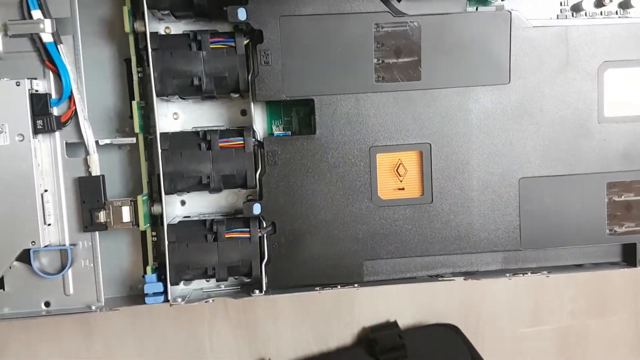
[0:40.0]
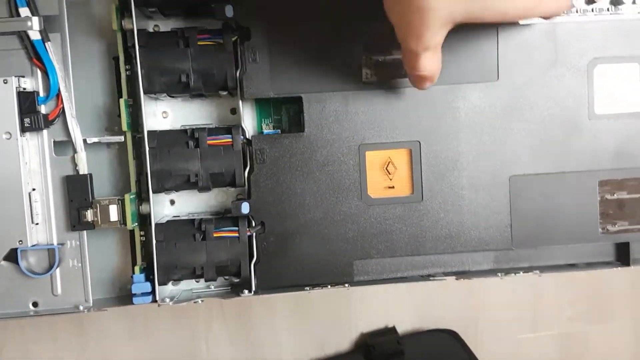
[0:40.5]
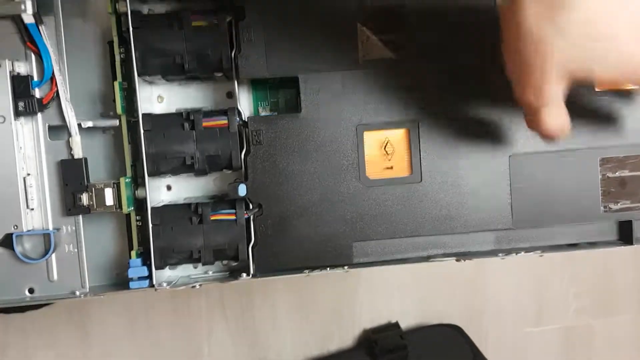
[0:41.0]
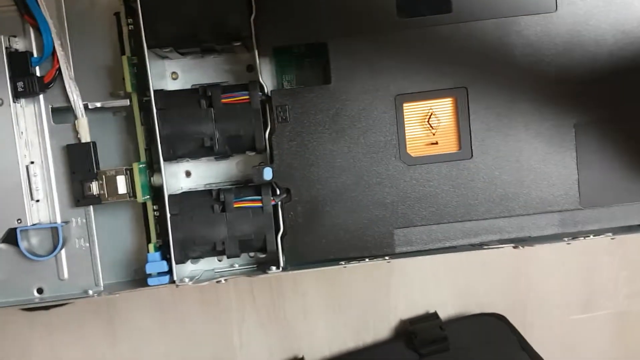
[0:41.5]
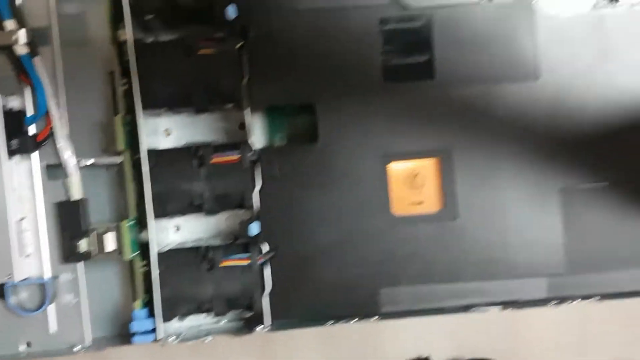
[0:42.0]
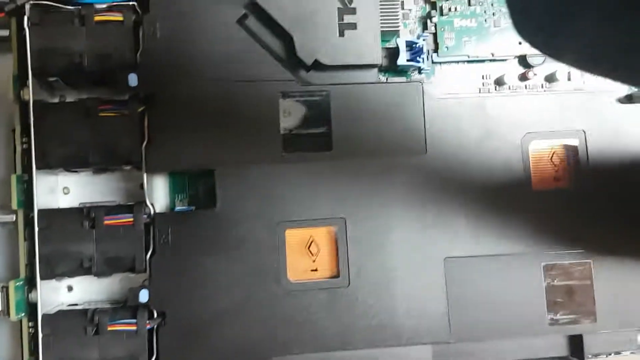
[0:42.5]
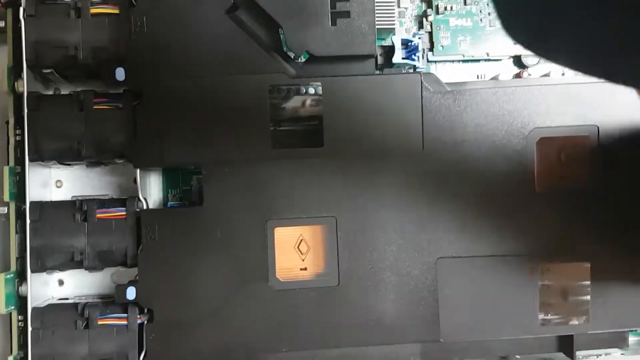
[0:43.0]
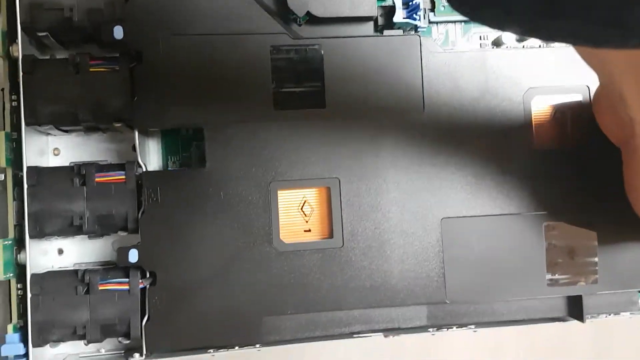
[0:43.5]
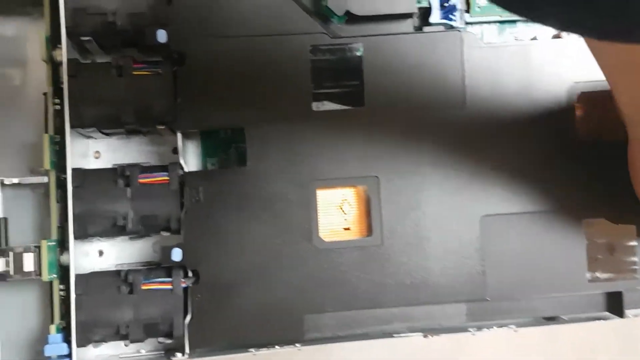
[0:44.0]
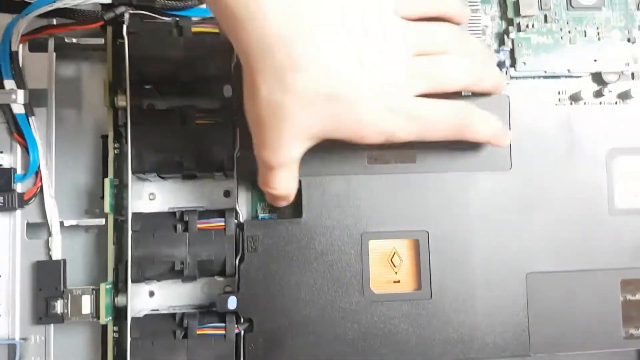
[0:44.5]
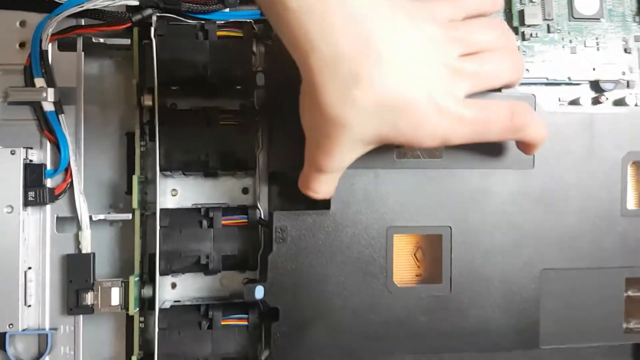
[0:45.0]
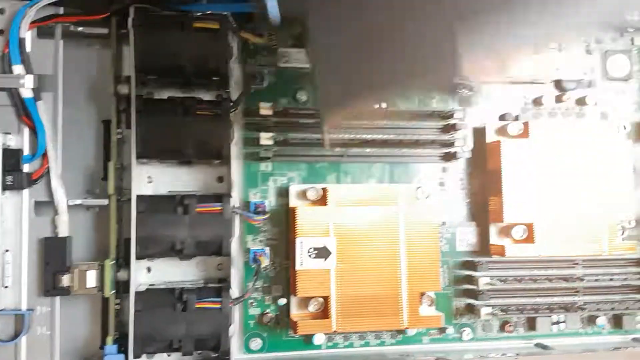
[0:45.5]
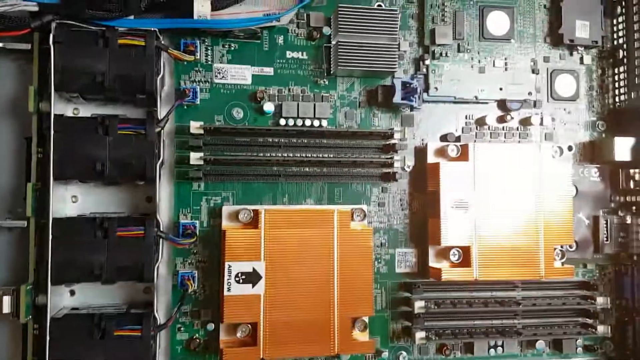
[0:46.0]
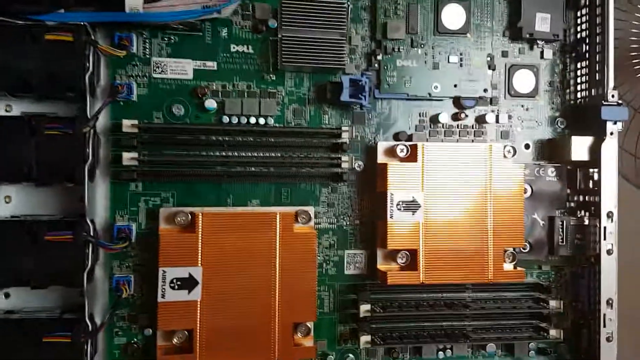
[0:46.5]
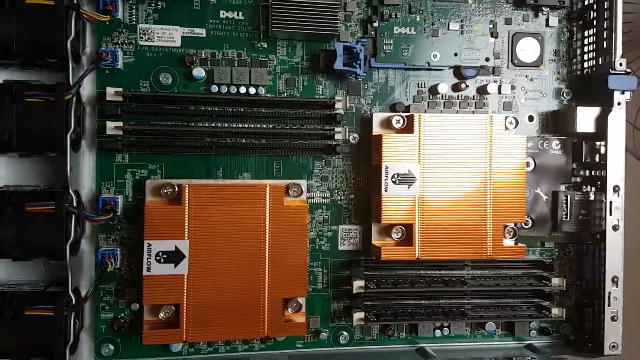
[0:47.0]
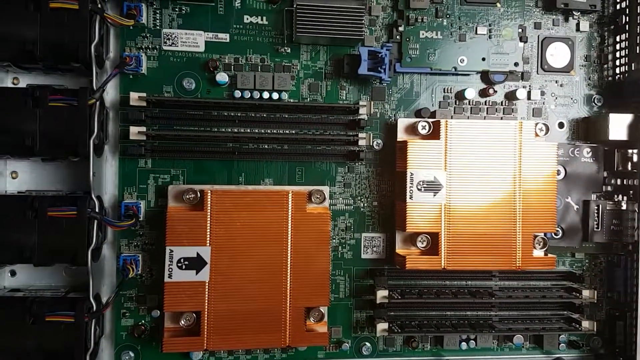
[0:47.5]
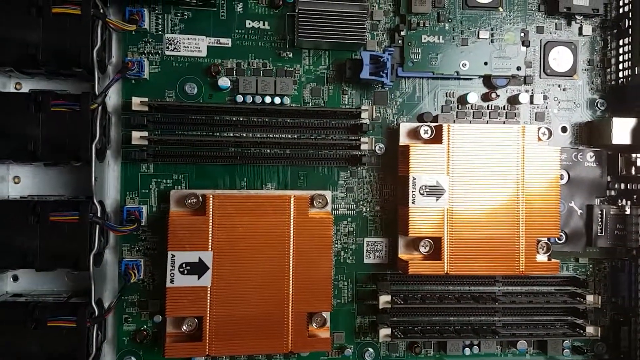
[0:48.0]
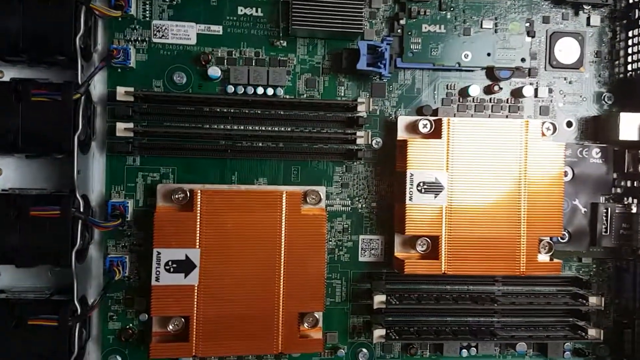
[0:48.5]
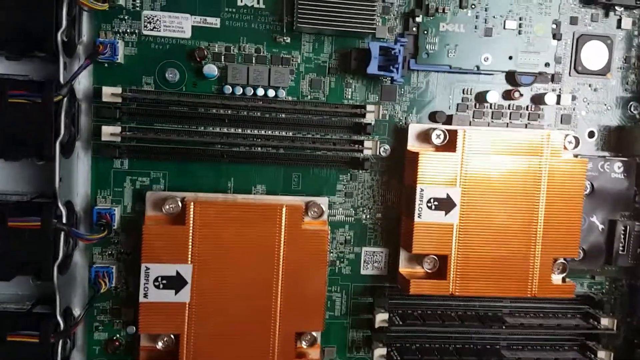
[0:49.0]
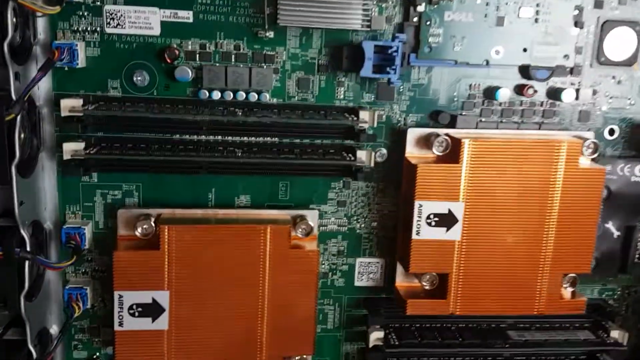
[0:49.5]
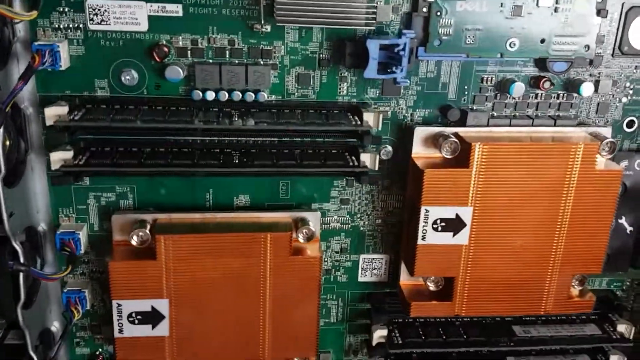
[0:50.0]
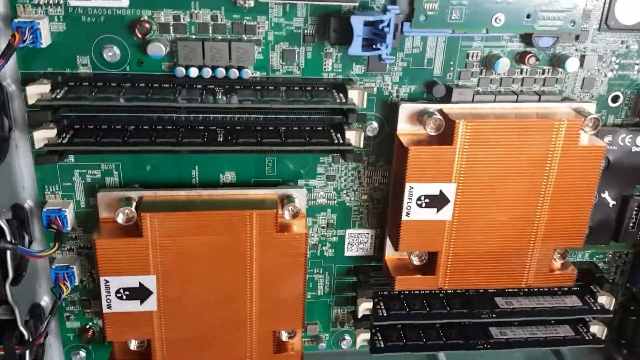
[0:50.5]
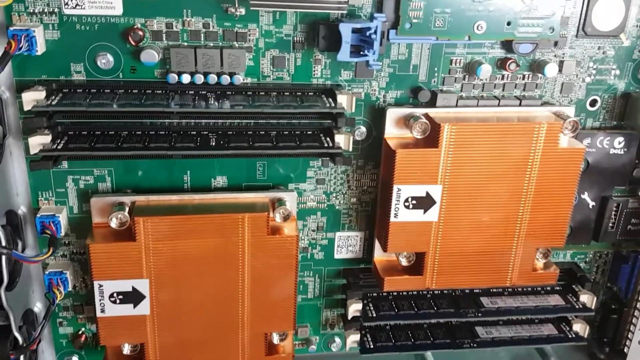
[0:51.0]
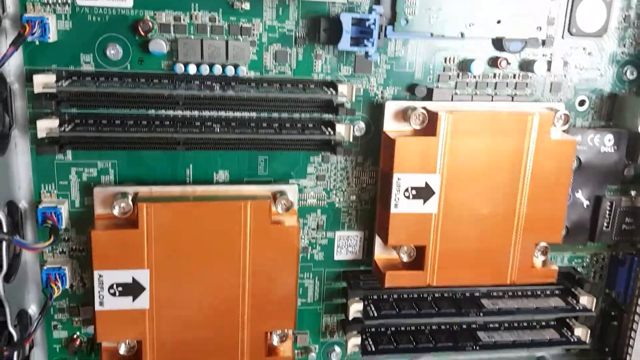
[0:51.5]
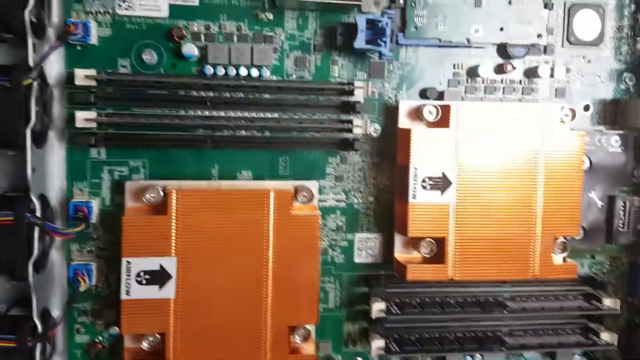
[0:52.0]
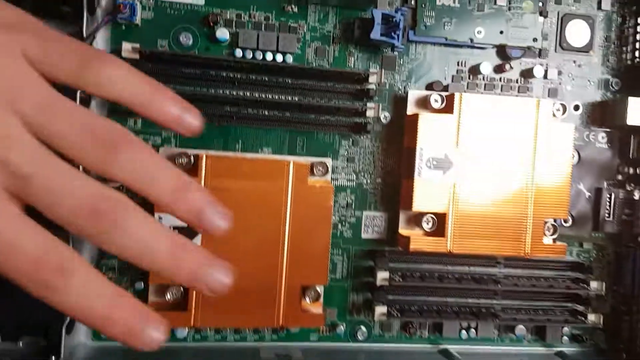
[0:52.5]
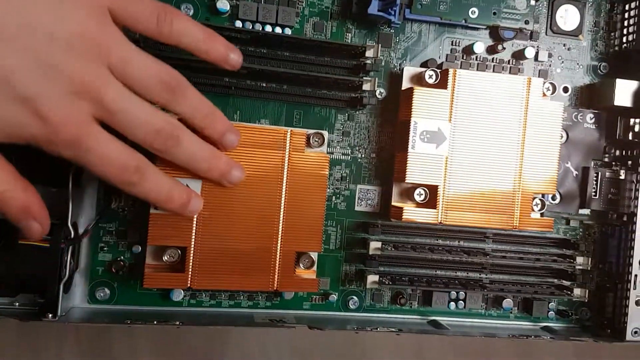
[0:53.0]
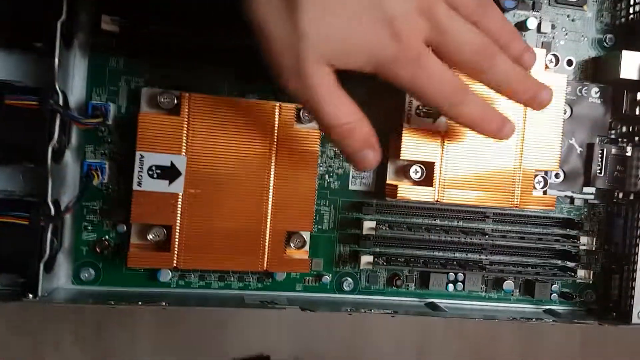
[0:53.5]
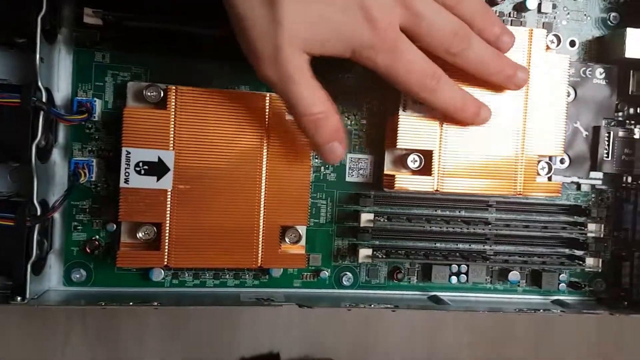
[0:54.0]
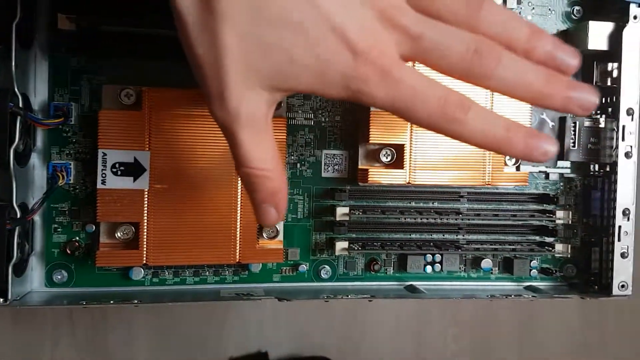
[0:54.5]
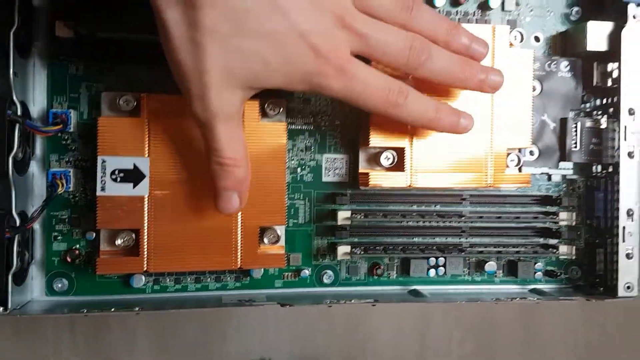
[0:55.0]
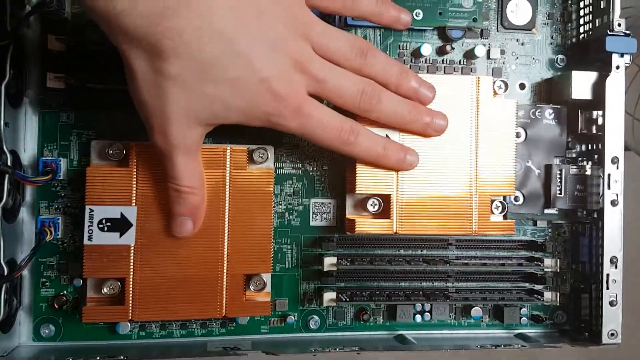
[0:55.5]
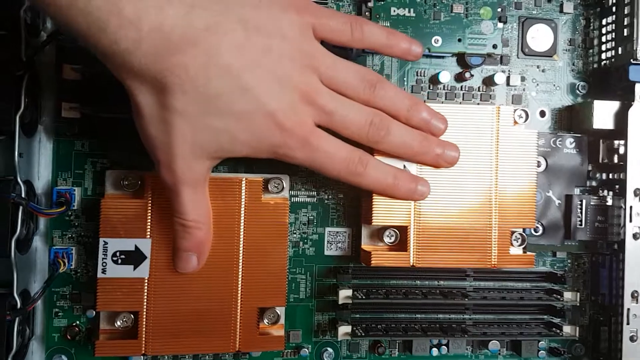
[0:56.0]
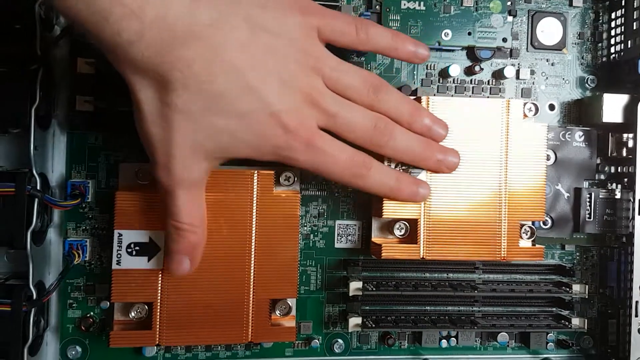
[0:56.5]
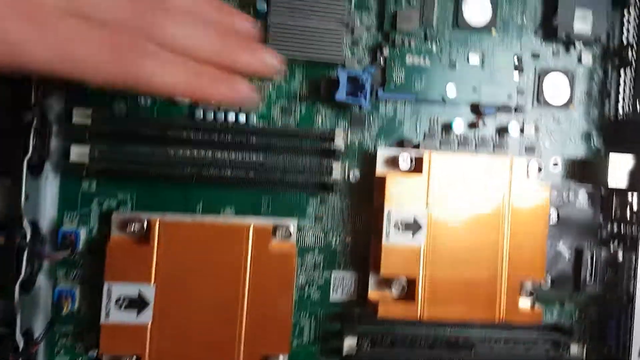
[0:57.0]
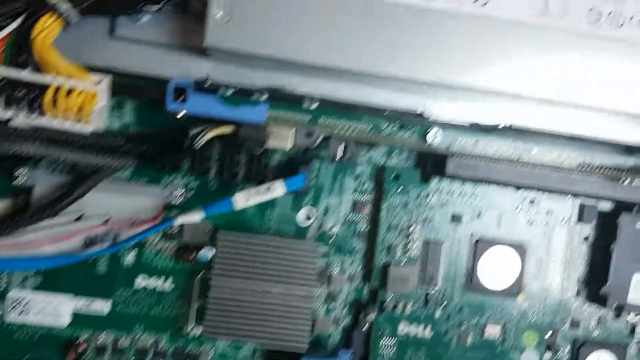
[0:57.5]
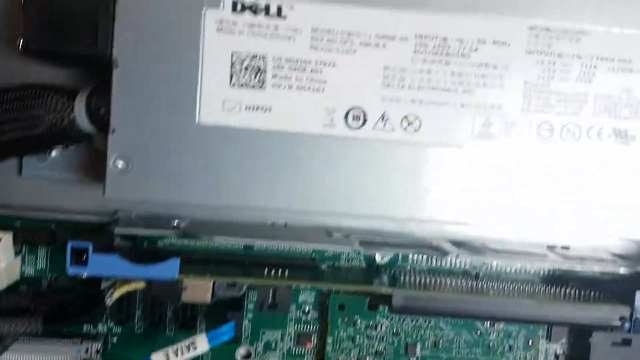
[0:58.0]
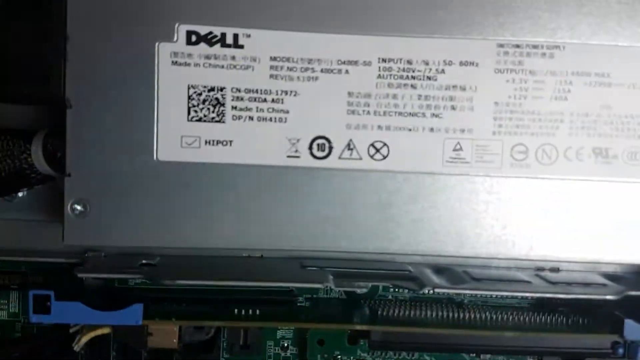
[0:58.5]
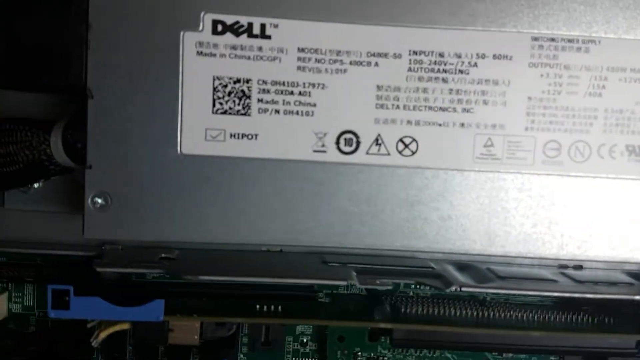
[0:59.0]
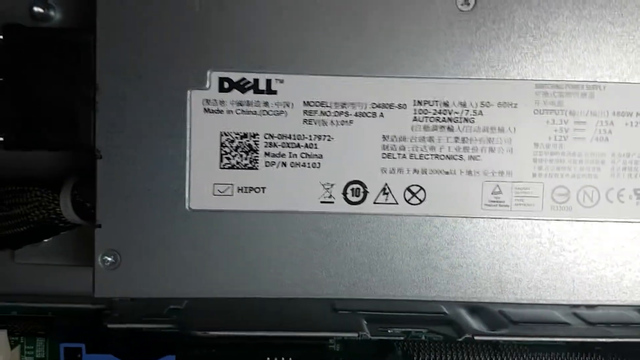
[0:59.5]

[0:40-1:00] The man's hand touches the black plastic element, which appears to be some sort of cover, and he removes it with his fingers. Underneath is a green board with various components, such as RAM and processors. He places the cover out of shot, perhaps on the other side of the table. The green circuit board, or motherboard, has various components and ports on it. After he inspects the motherboard, a Dell logo with information about the manufacturer is visible, and the board also features the Dell name. The colours are mainly green, silver and orange. Various wires connect other parts of the server to the motherboard, and on the right there are vents leading out the back, perhaps for cooling.